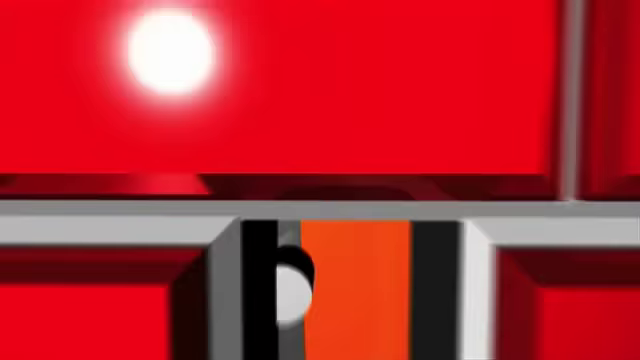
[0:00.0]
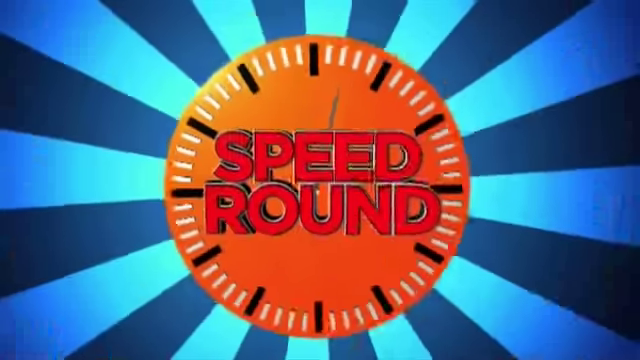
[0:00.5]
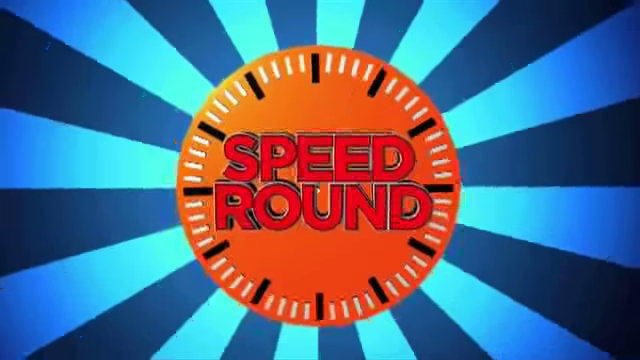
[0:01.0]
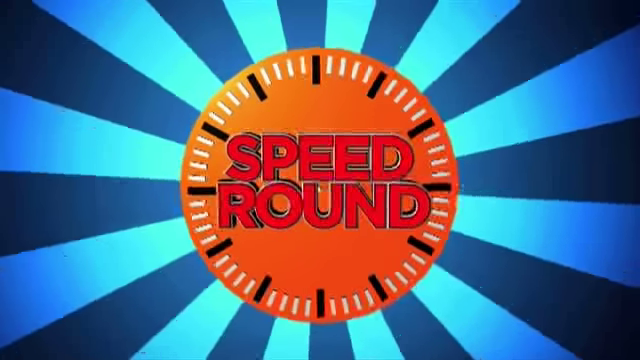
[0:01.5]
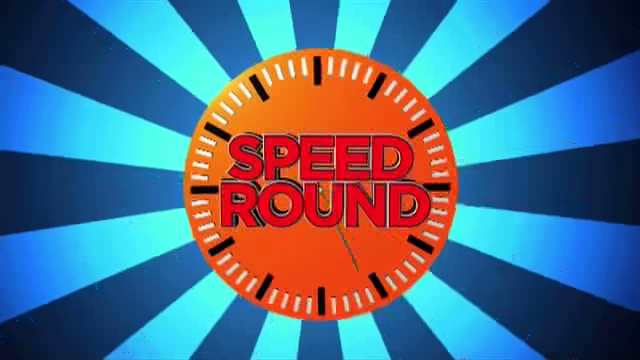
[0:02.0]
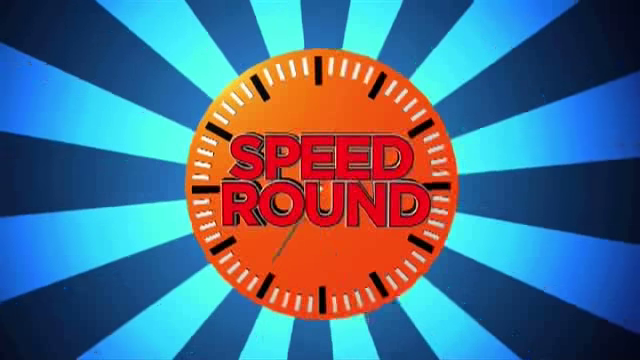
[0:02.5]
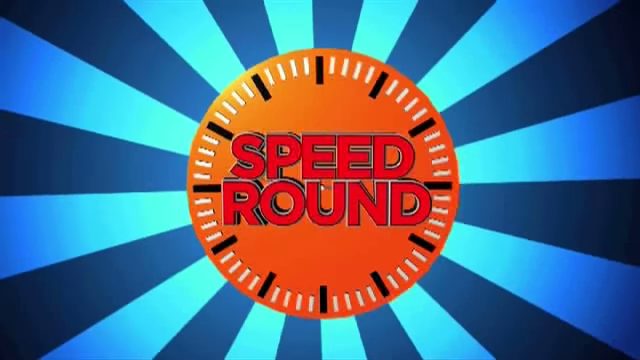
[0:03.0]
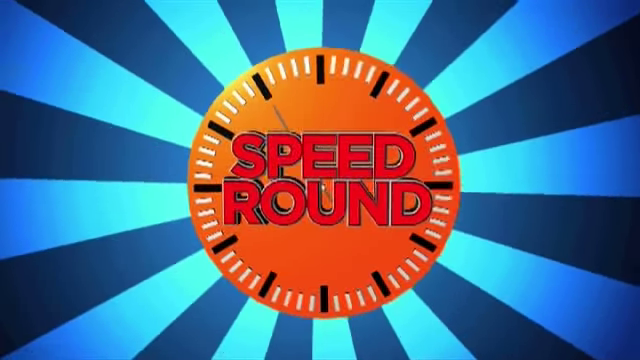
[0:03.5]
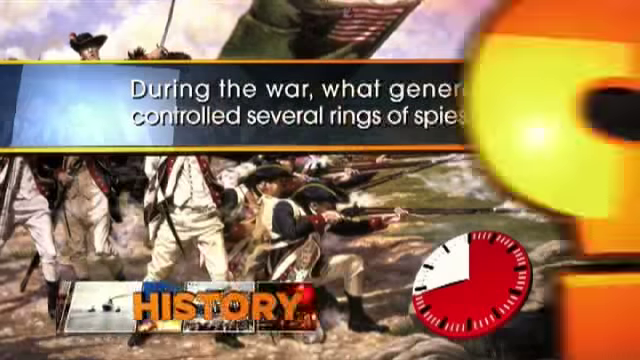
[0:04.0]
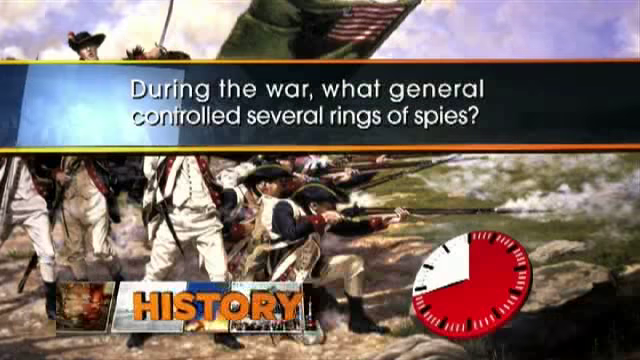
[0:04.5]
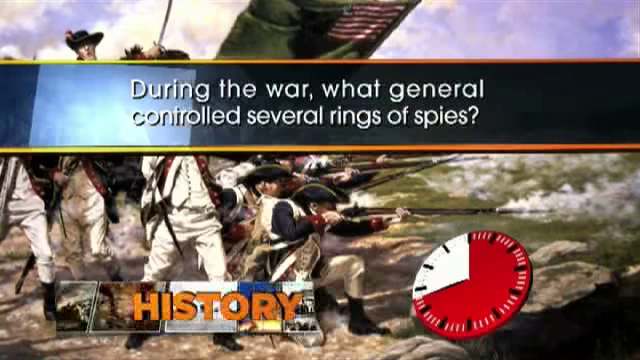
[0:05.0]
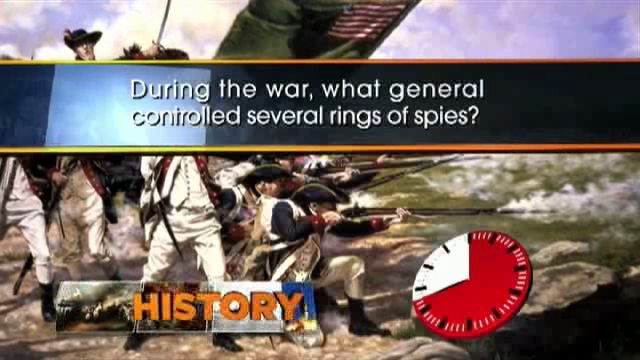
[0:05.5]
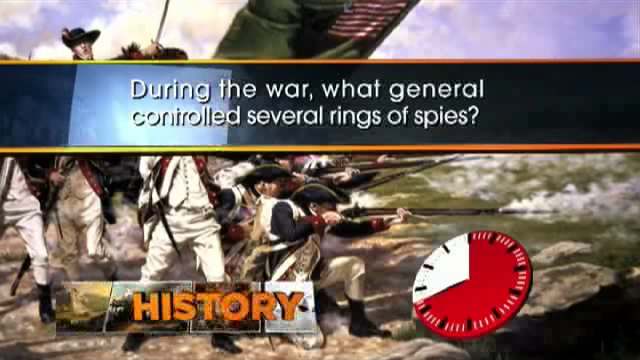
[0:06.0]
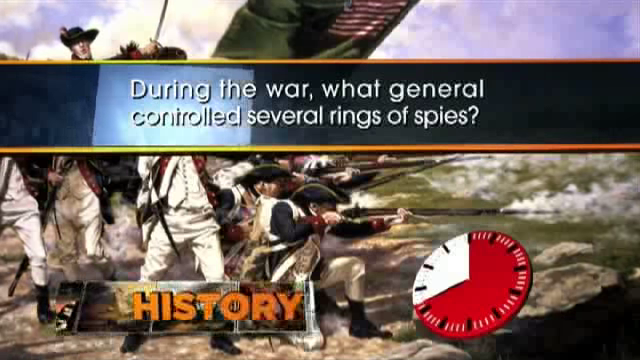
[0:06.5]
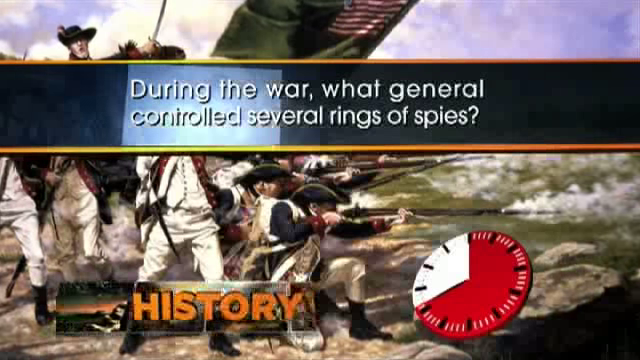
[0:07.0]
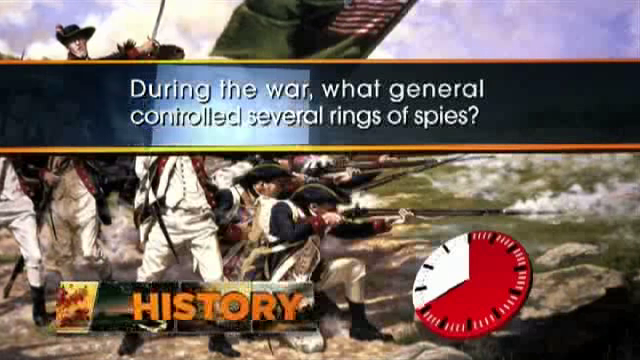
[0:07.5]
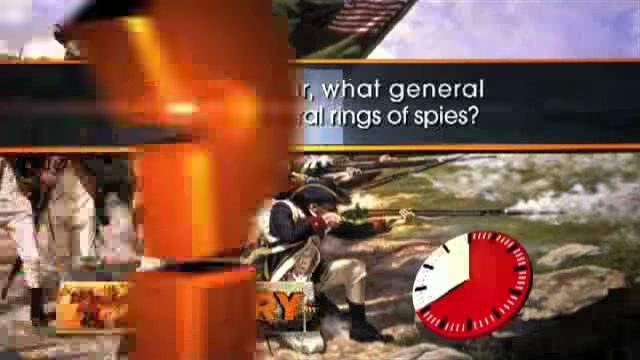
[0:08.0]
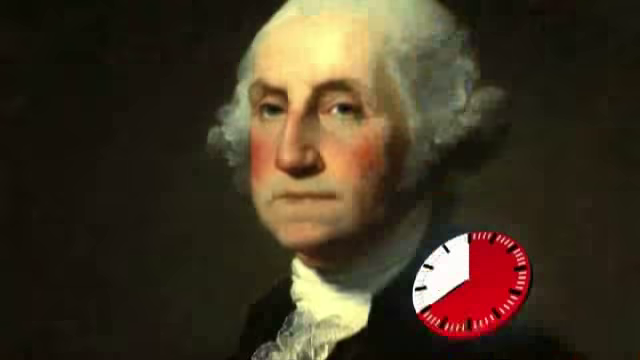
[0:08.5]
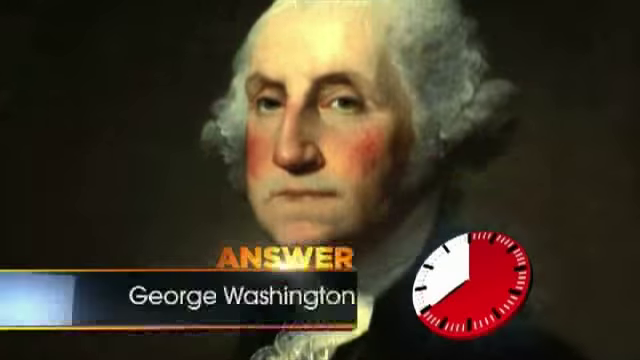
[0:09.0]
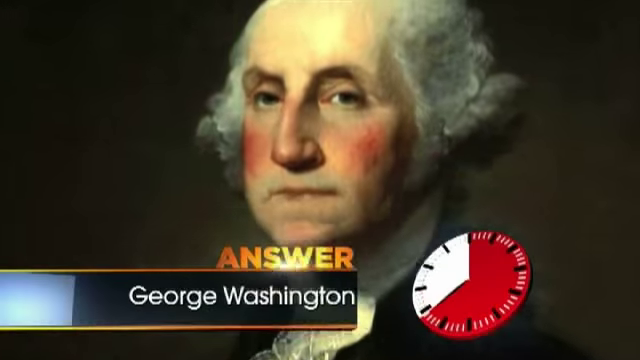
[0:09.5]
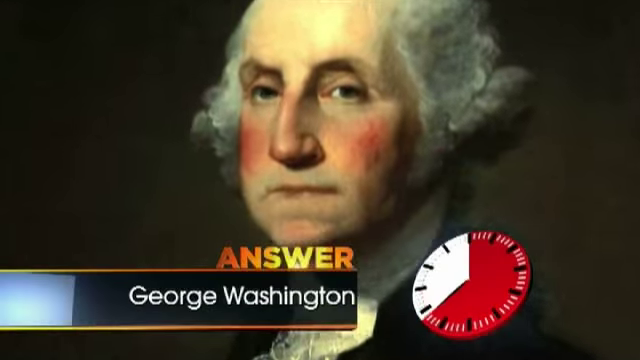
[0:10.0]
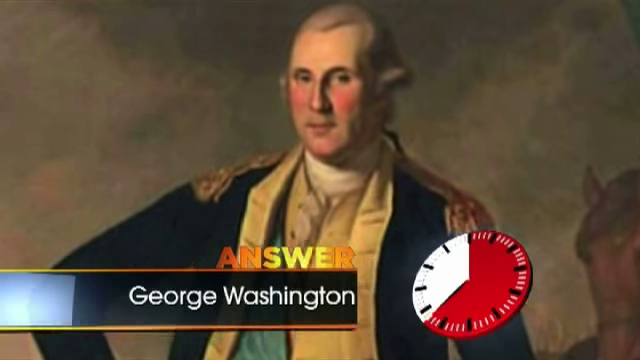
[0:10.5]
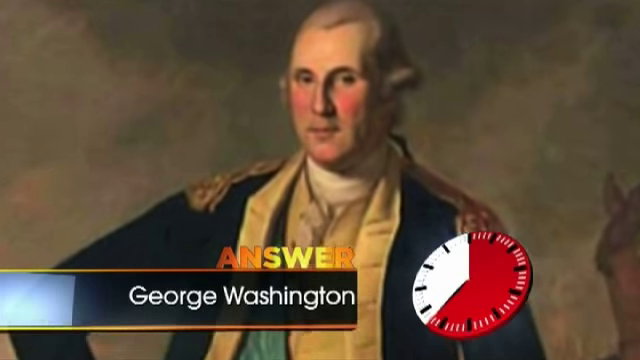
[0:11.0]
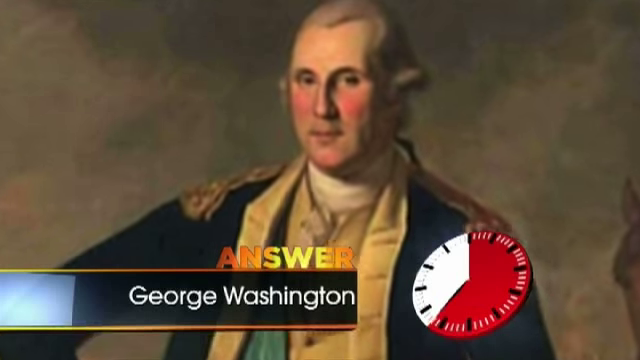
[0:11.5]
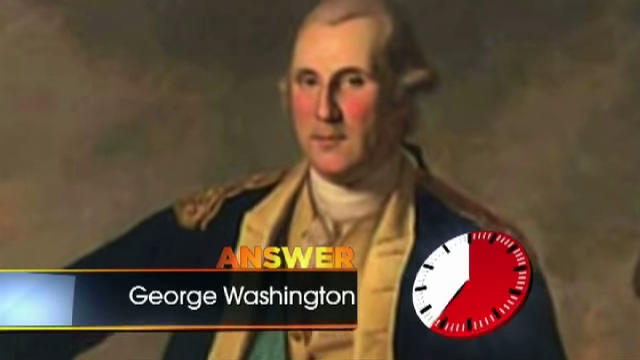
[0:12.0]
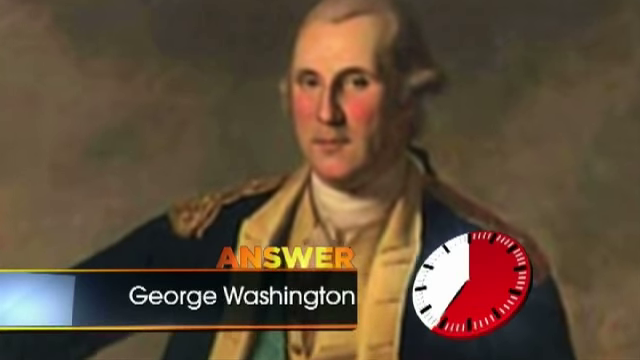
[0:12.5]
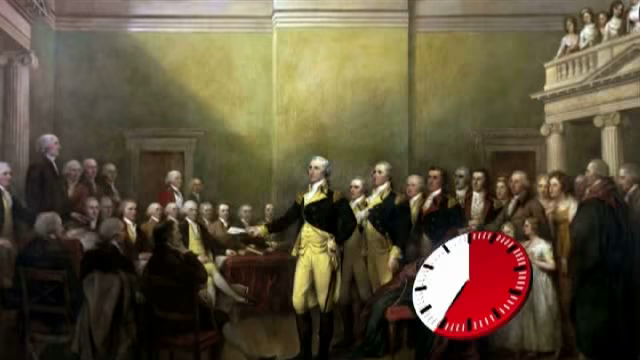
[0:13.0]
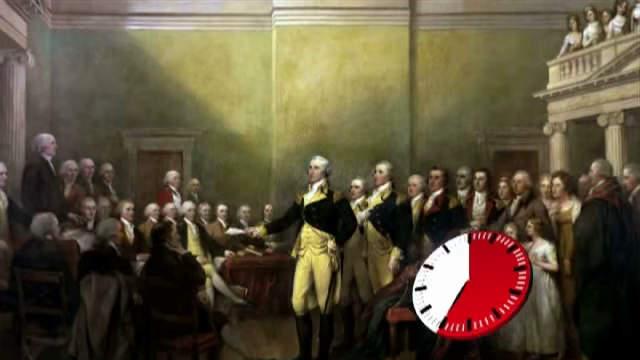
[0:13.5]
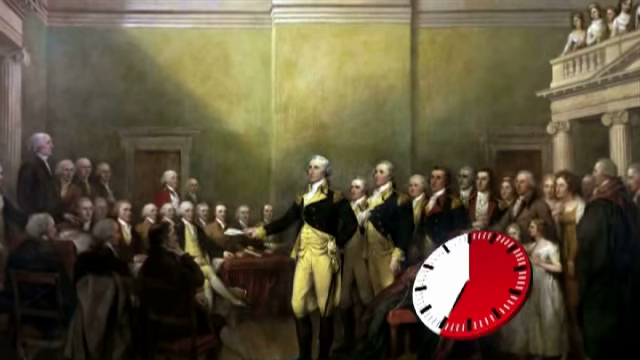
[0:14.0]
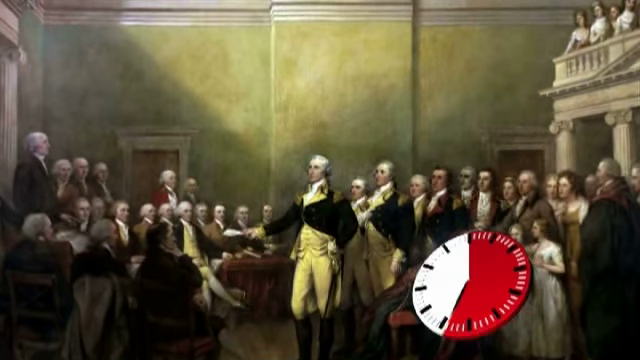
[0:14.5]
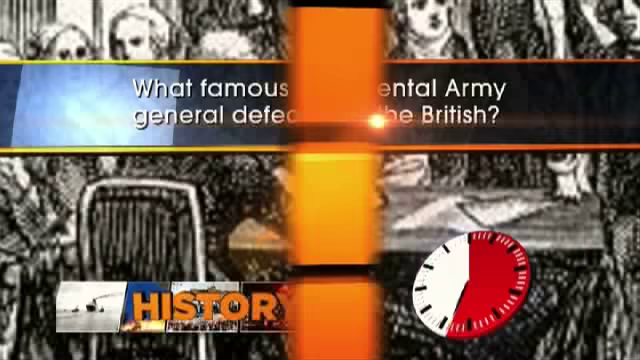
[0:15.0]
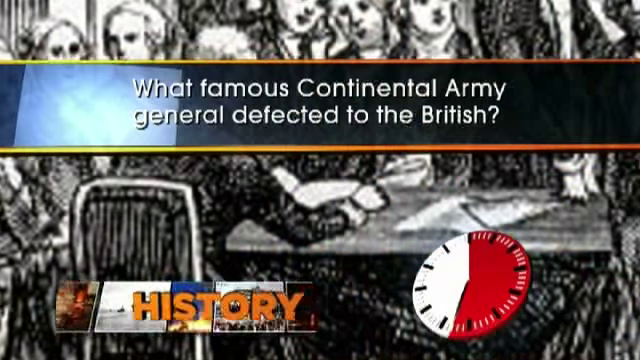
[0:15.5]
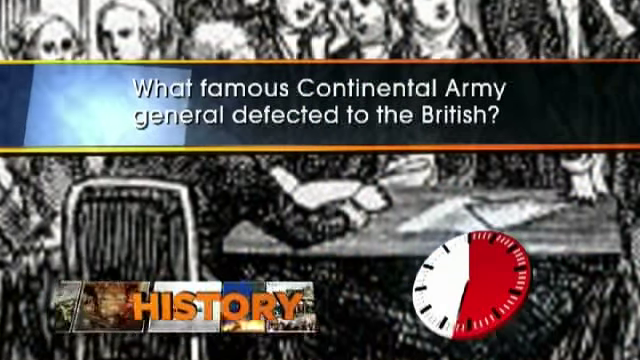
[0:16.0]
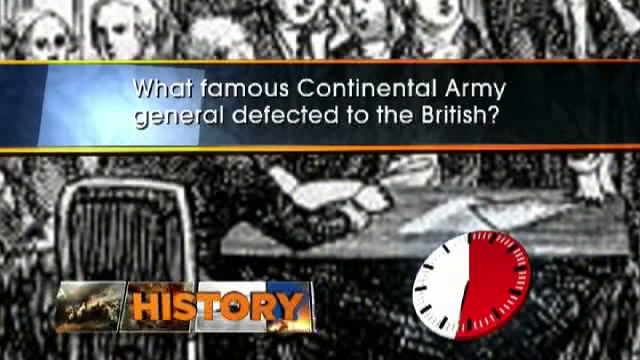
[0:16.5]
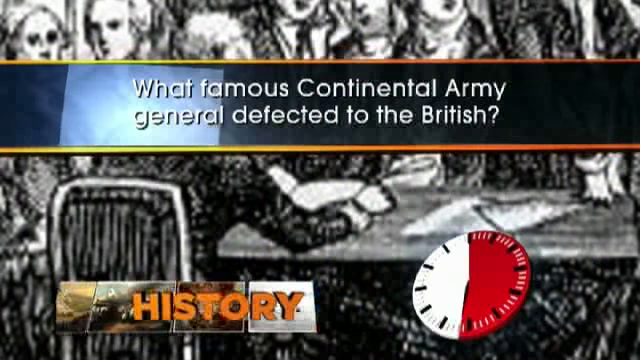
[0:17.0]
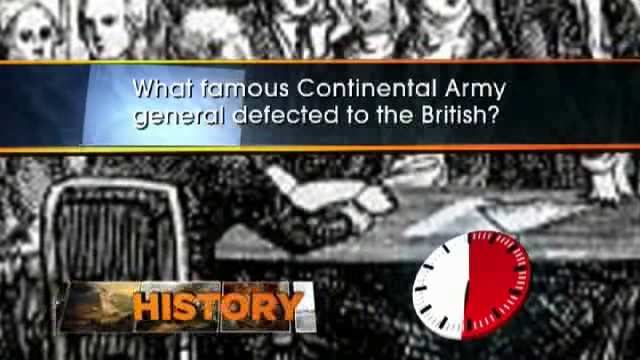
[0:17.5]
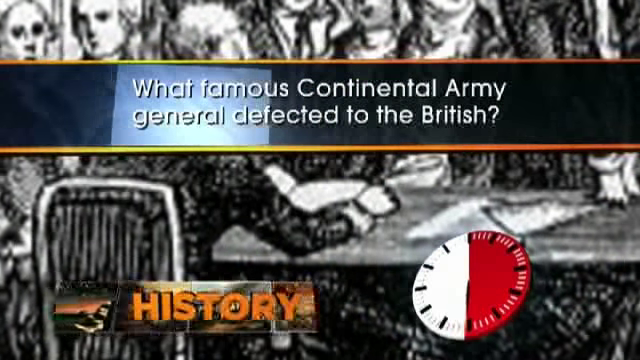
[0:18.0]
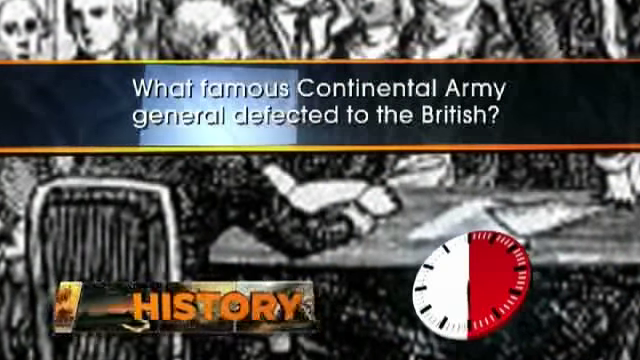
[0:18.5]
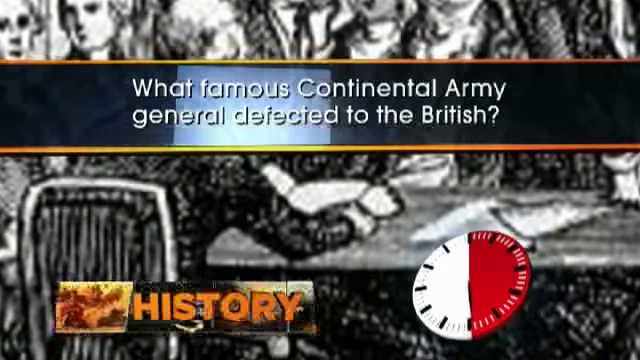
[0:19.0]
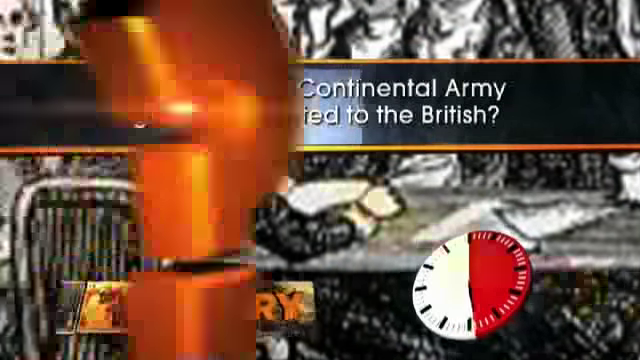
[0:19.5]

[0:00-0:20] The video is a little wider than it is tall. It opens with what looks like a clock in the center: it has an orange background, white minute marks around the edge, and thicker black marks for the hours. In the center, capitalized red lettering reads "Speed Round." Around the outside, light blue and medium blue stripes rotate clockwise. The video then moves to a different image with a banner across the center of the top in white lettering that reads "During the war, what general controlled several rings of spies." In the background, people from the Revolutionary War aim their rifles to the right, and at the bottom, orange capital letters read "History." Next comes a static image zoomed in on George Washington's headshot, facing roughly toward maybe the 6:30 direction, with "Answer" and "George Washington" at the bottom. The video then goes to an oil painting of what looks like a meeting of people involved in government decisions of the time: a bunch of men in white wigs in a big room, probably a good 15 on the left and maybe 15 to 20 on the right, with what looks like George Washington in the center.